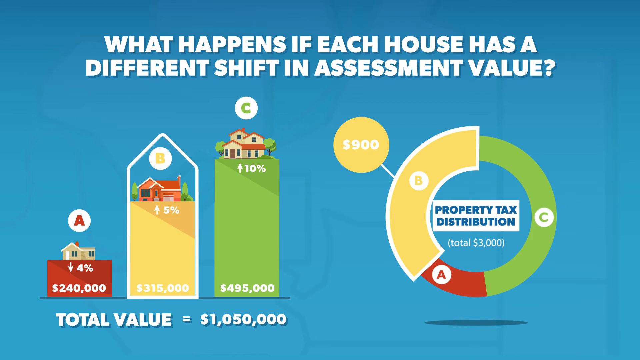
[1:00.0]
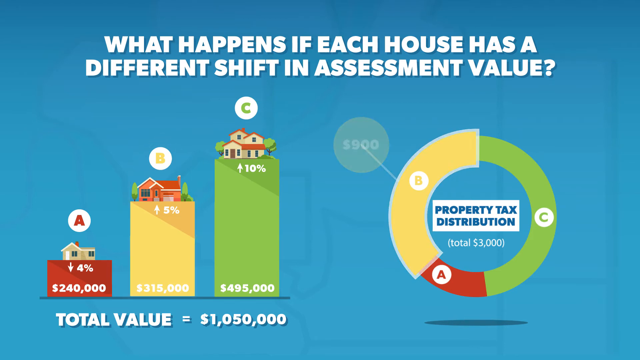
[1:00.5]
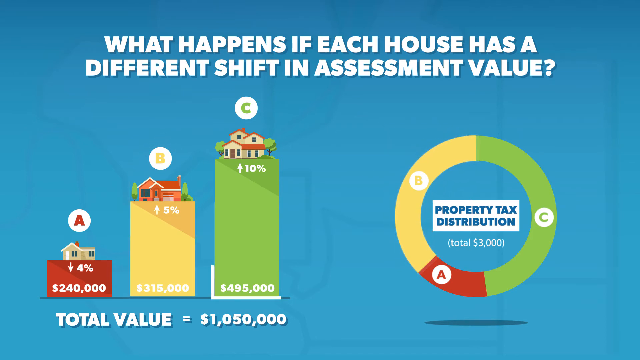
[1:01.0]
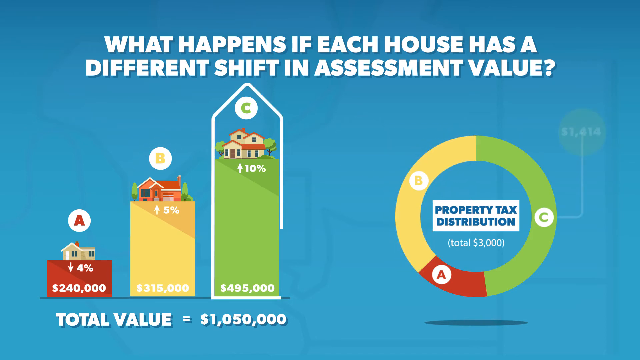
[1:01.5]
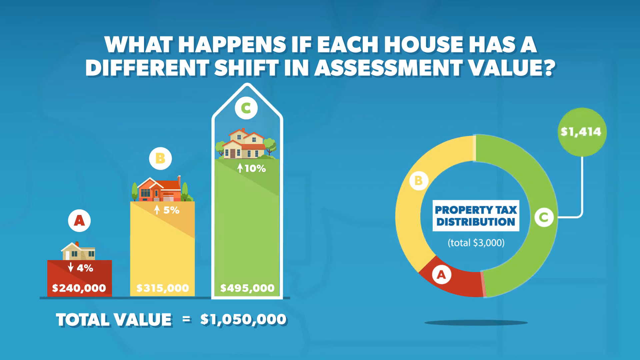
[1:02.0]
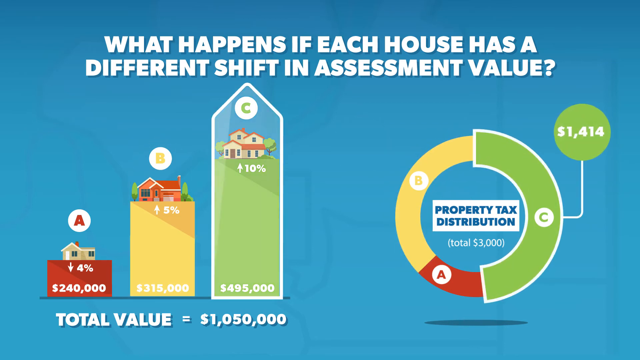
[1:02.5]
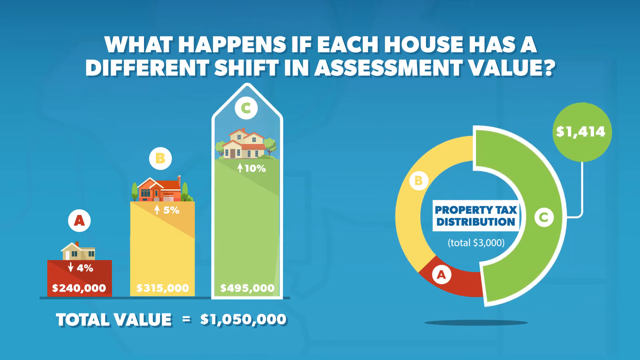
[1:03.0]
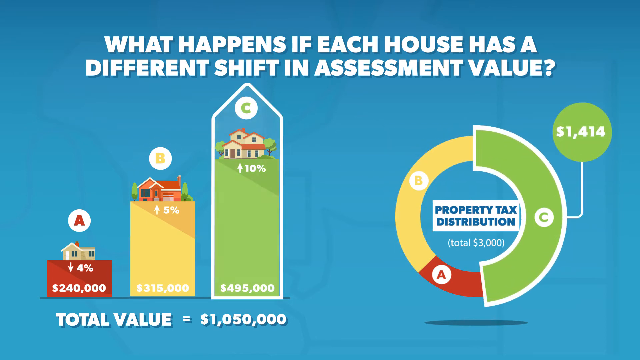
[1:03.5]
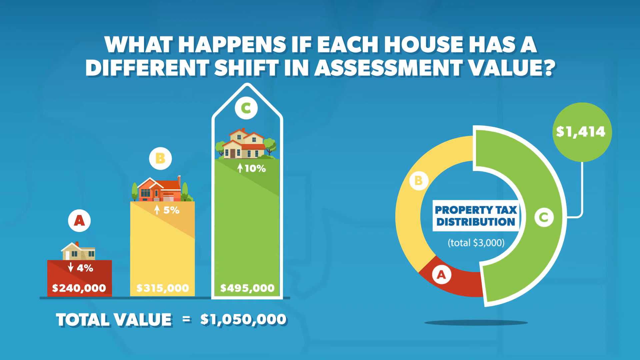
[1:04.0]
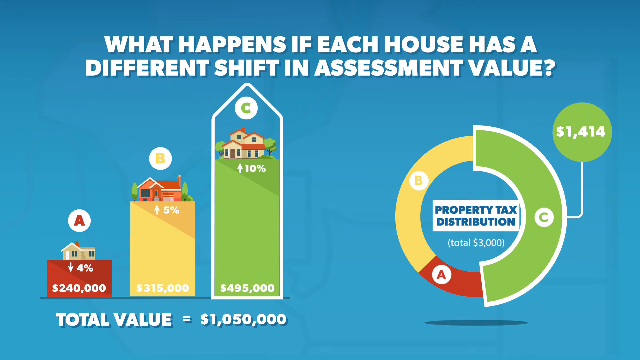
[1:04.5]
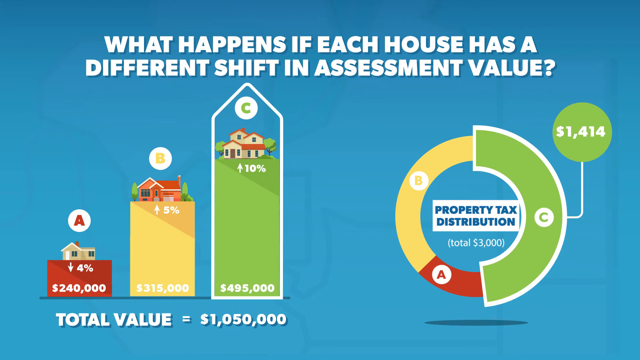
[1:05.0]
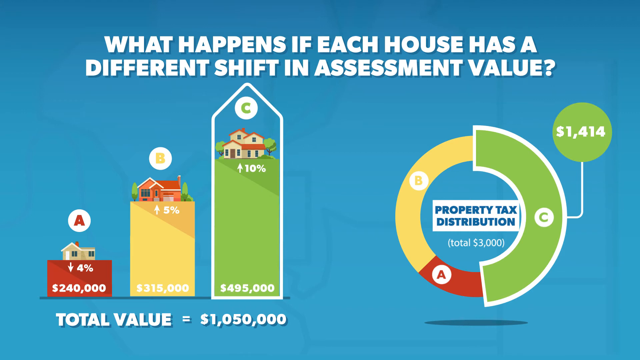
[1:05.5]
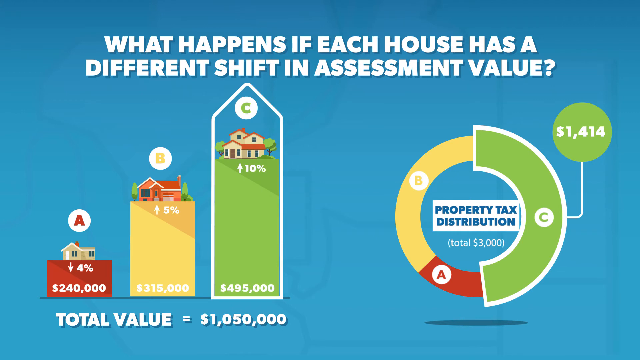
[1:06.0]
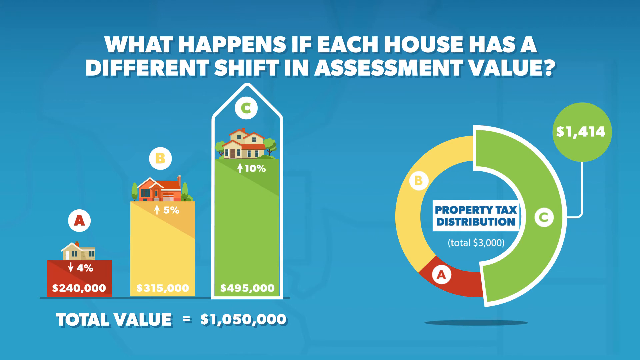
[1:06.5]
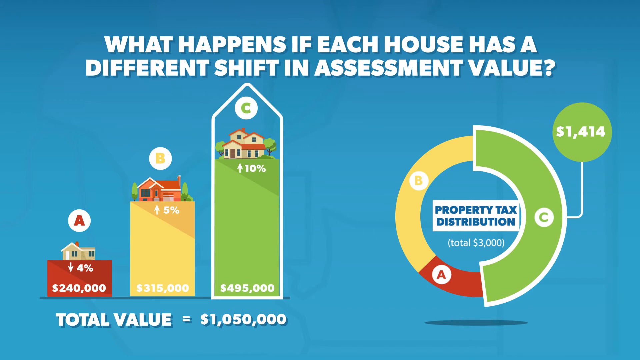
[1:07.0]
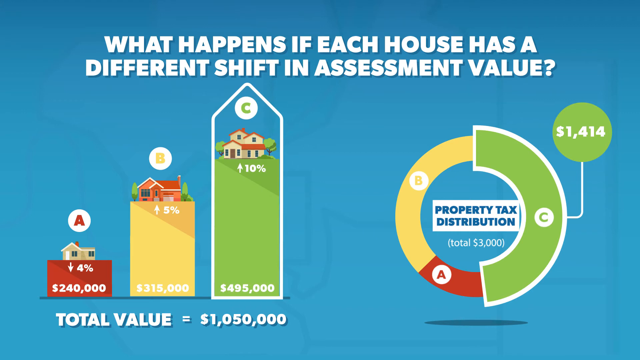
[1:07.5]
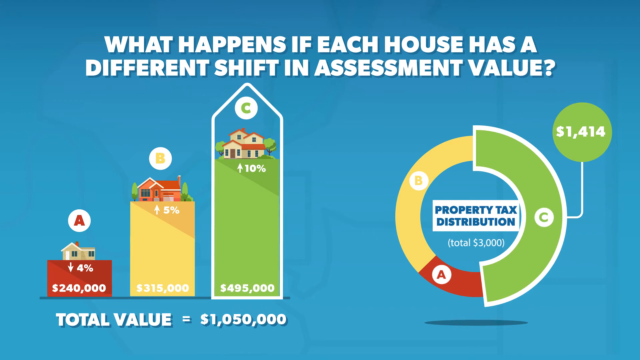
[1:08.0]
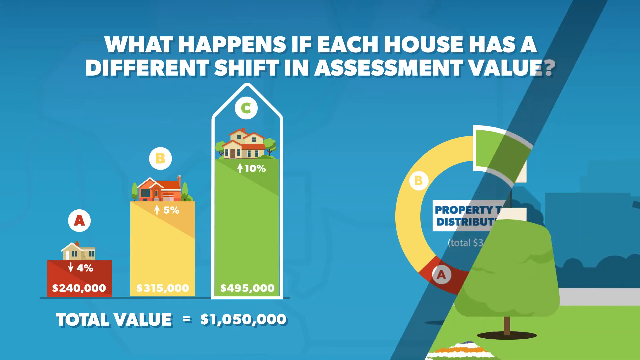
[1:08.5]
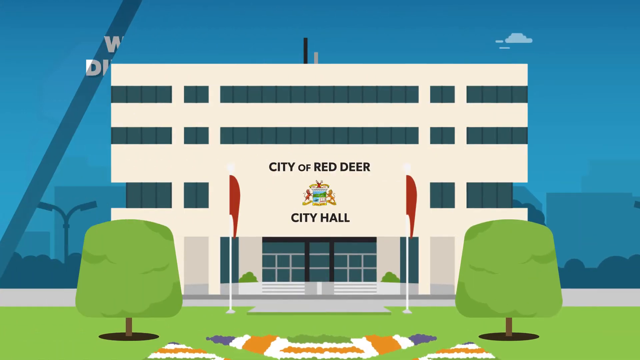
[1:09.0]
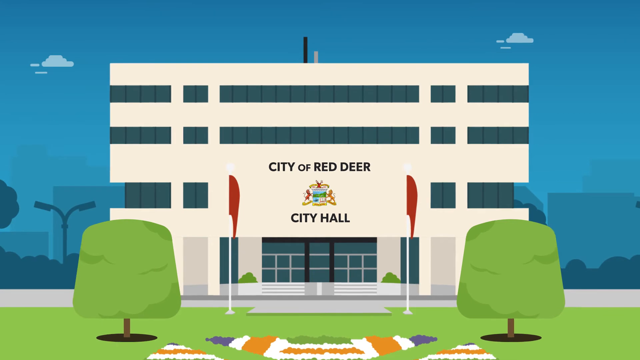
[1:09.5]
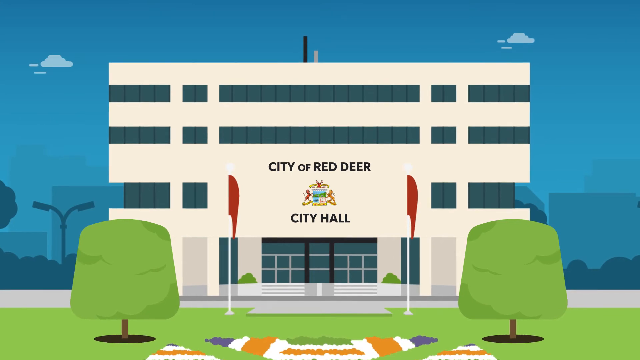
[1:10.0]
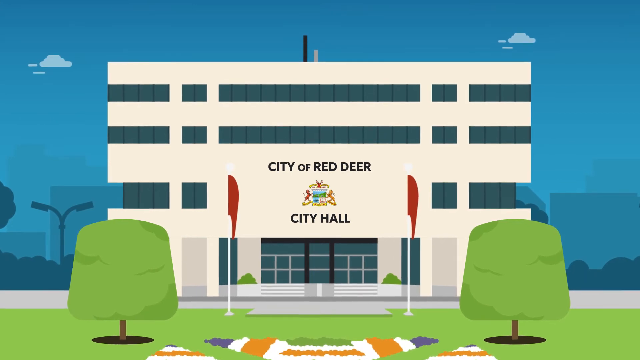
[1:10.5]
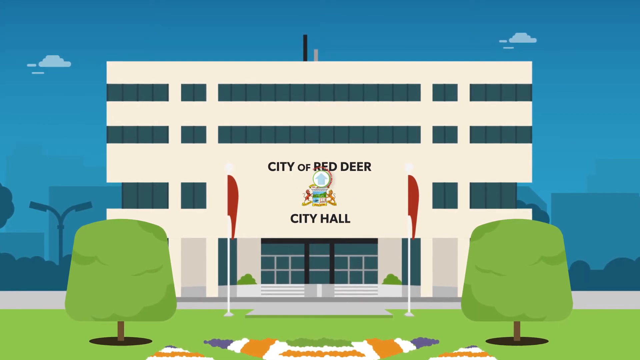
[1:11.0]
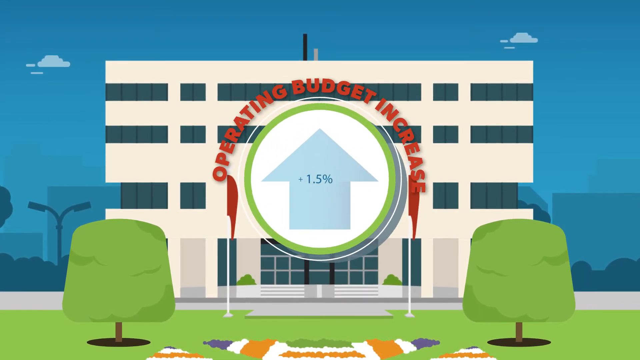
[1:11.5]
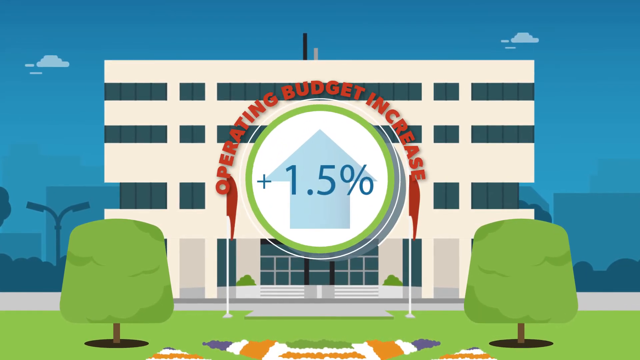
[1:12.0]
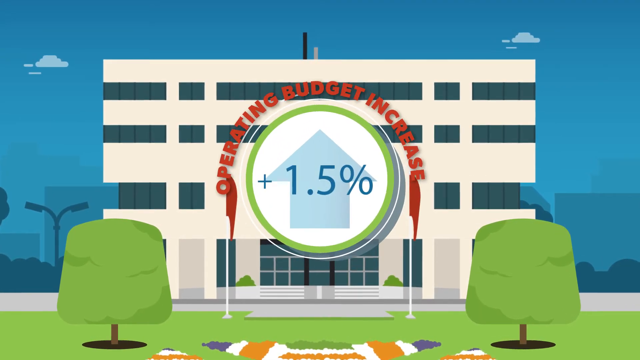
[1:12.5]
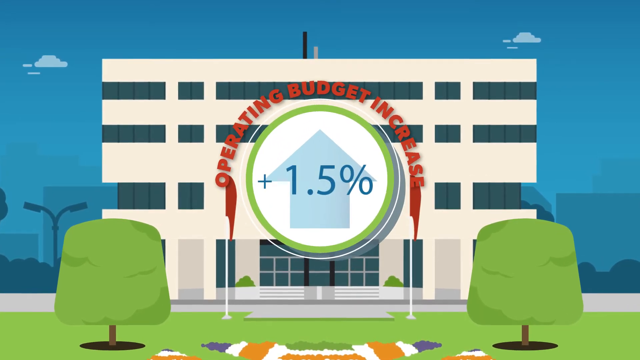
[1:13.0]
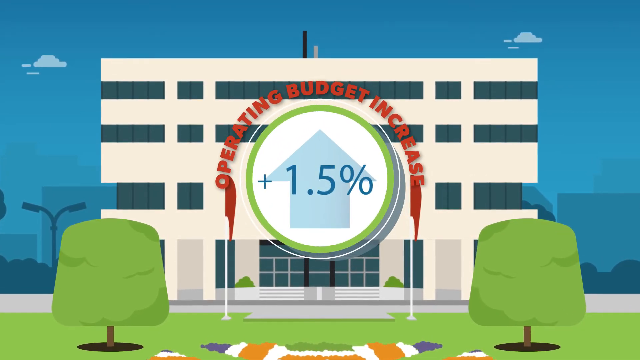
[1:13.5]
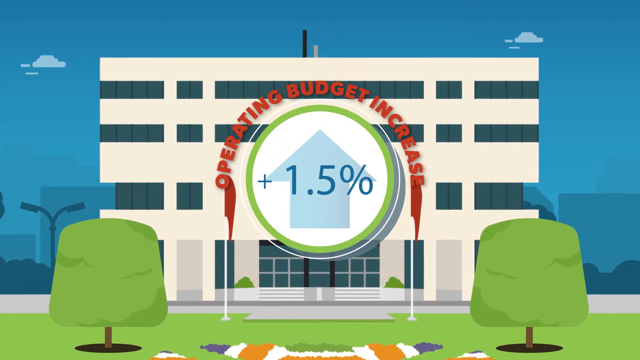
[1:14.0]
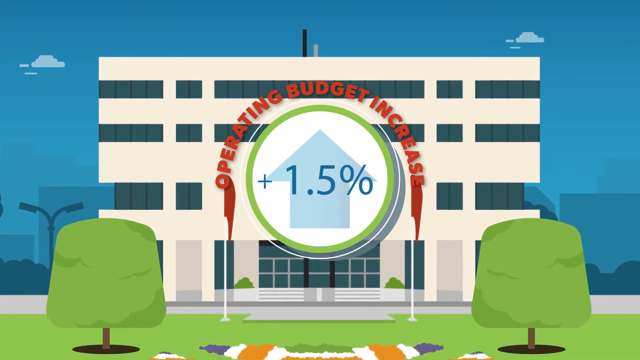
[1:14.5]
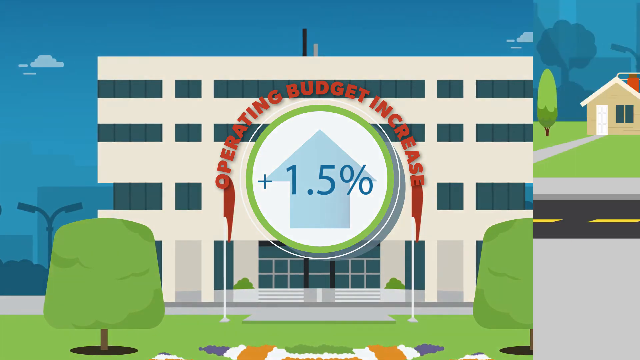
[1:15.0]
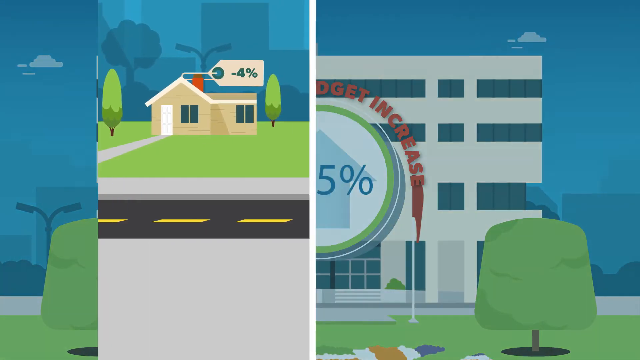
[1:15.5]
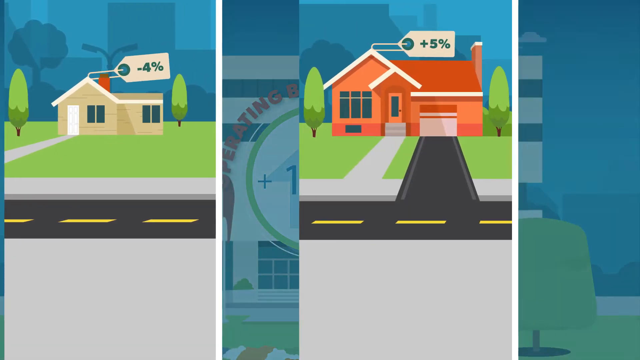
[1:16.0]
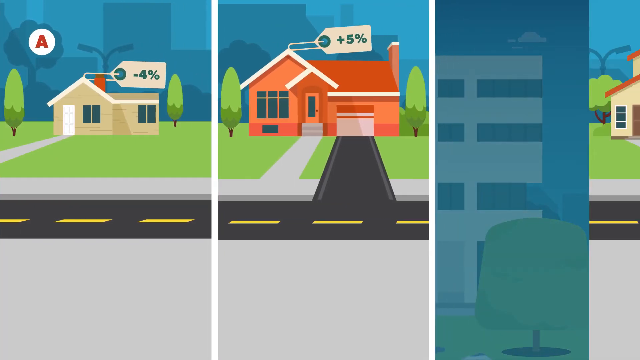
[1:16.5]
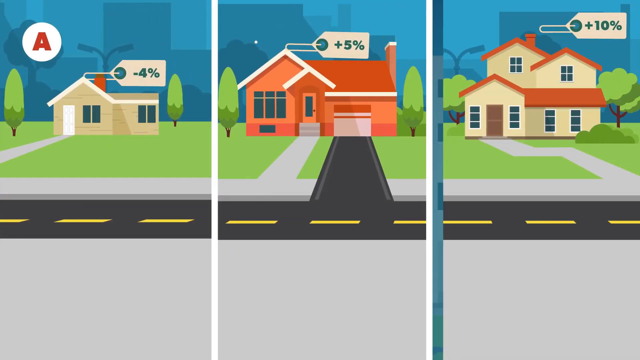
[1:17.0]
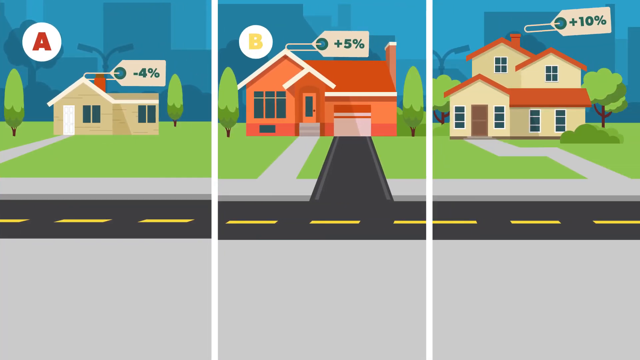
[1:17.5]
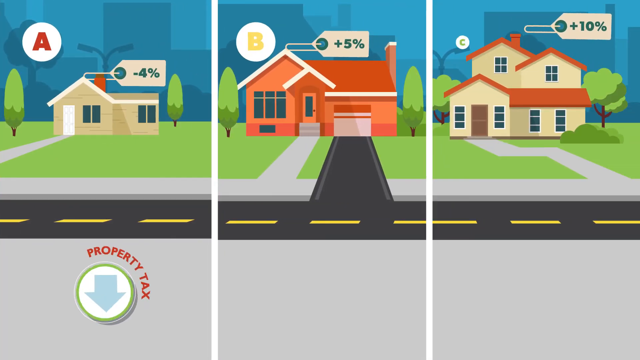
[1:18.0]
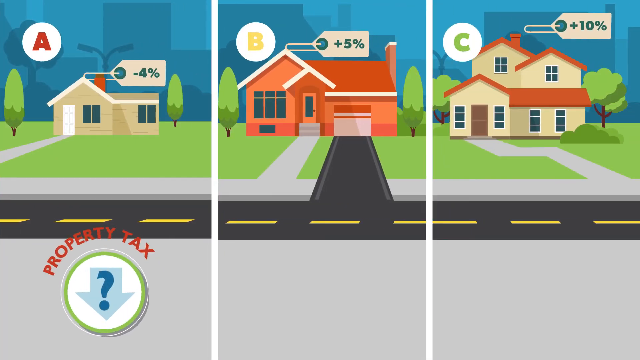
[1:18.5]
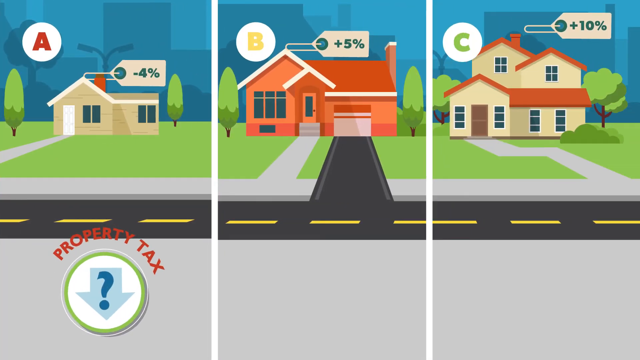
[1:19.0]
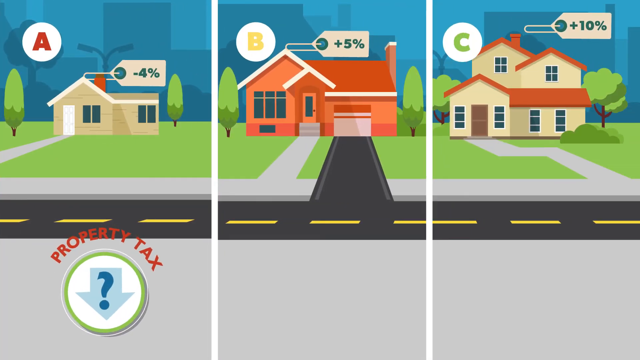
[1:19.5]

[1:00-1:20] The presentation from the city of Red Deer continues, showing houses, their values and how much tax they incur. The illustration is captioned with what happens if each house has a different shift in assessment value. House C appears to be highlighted, with the property tax distribution apparently up to 1,400.